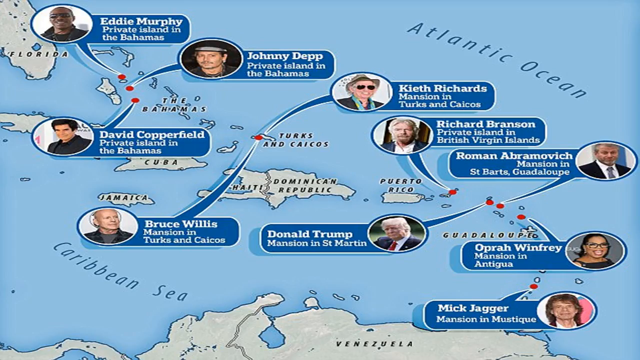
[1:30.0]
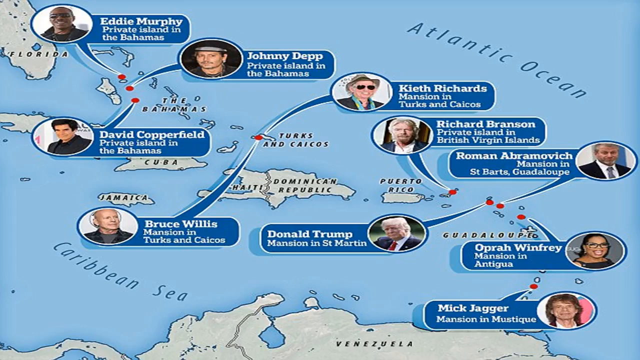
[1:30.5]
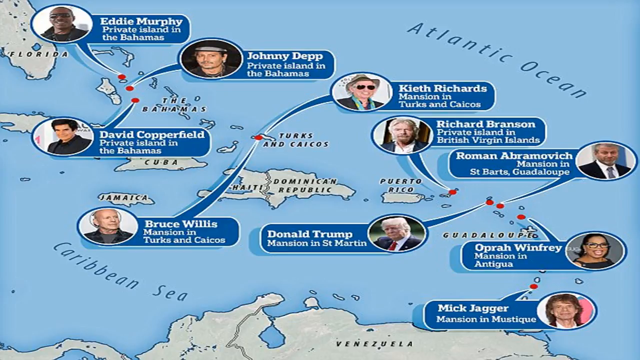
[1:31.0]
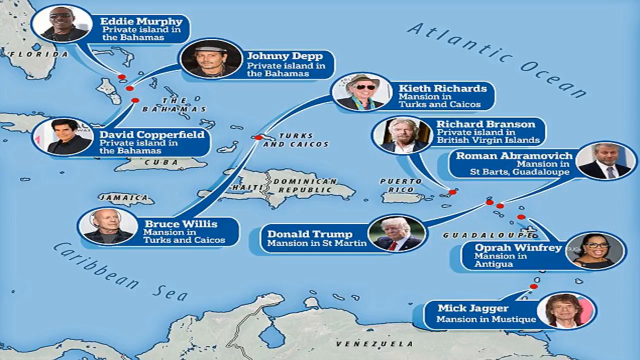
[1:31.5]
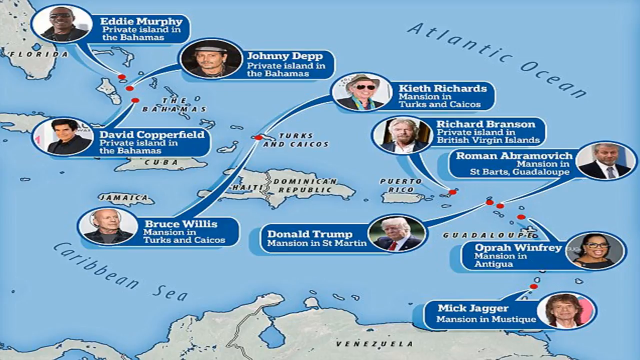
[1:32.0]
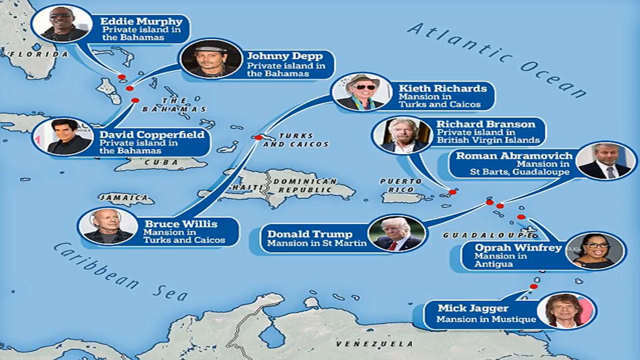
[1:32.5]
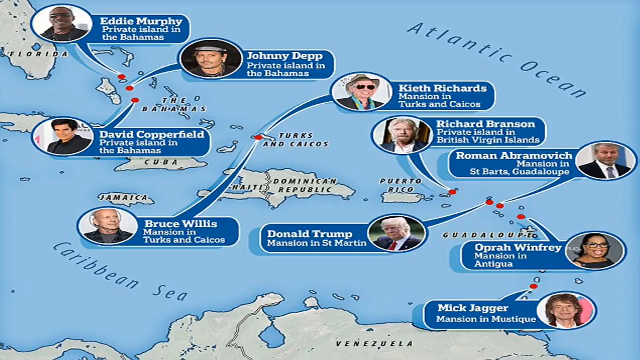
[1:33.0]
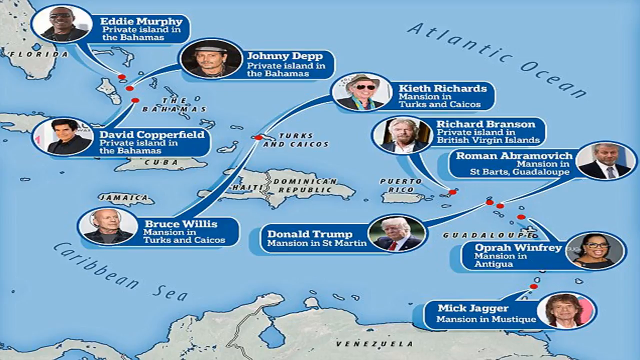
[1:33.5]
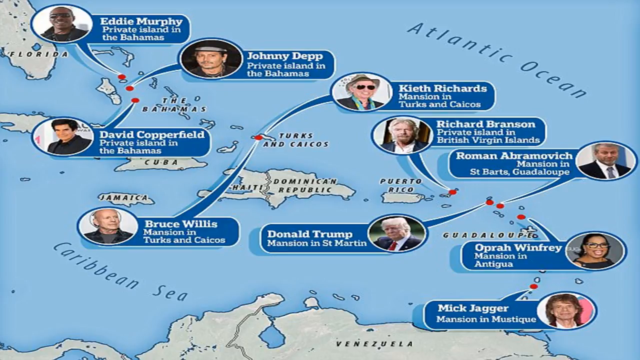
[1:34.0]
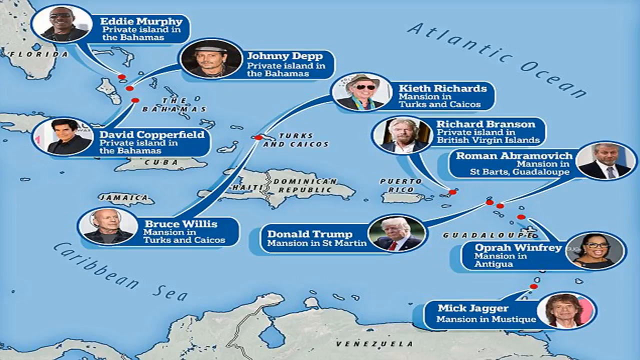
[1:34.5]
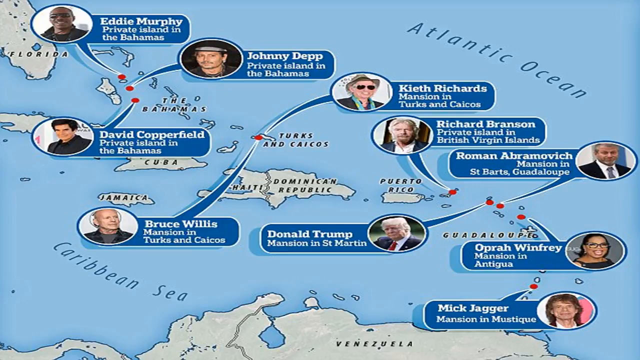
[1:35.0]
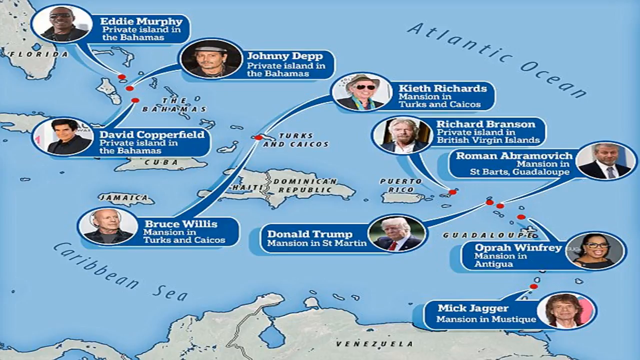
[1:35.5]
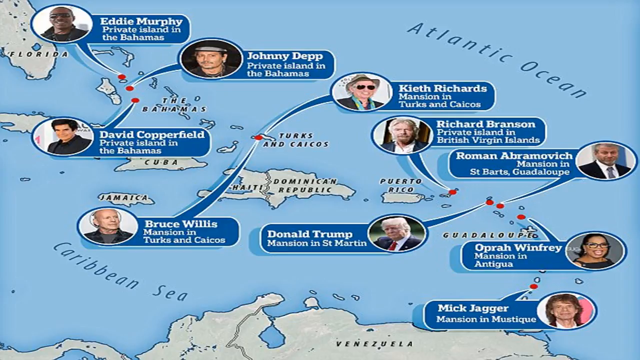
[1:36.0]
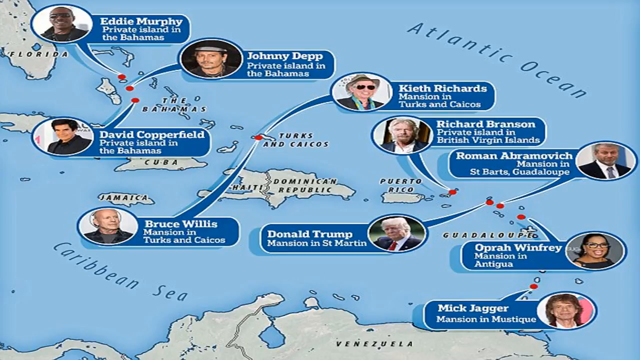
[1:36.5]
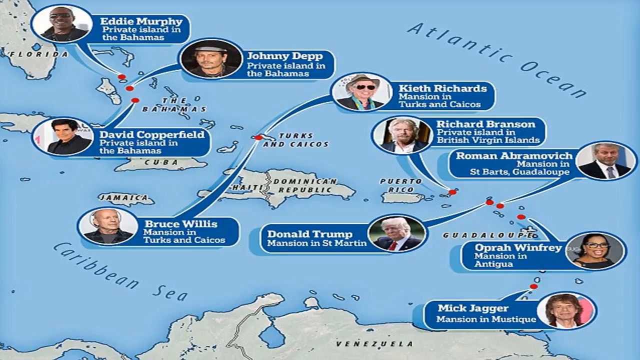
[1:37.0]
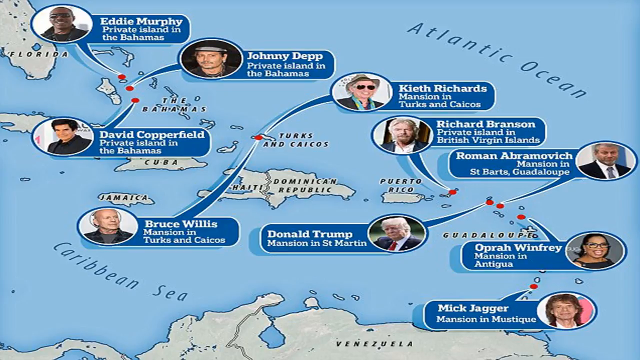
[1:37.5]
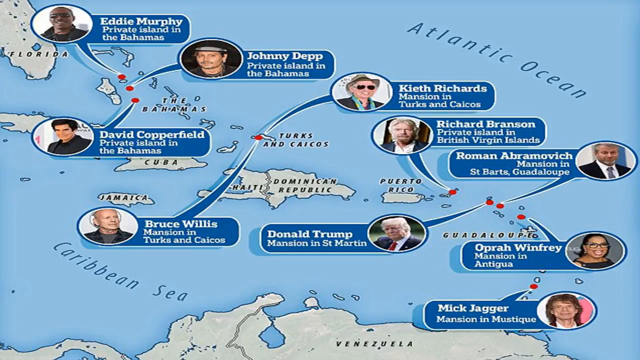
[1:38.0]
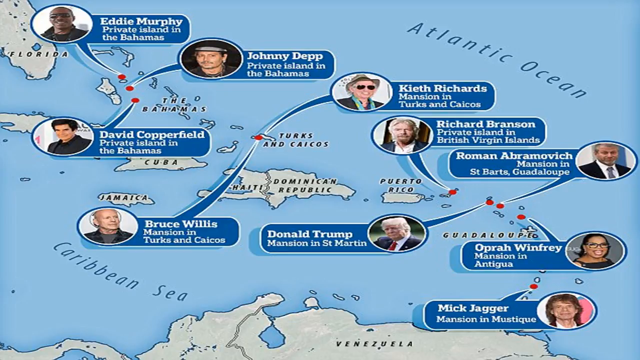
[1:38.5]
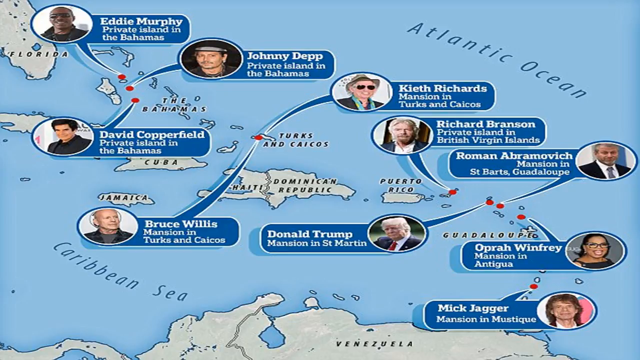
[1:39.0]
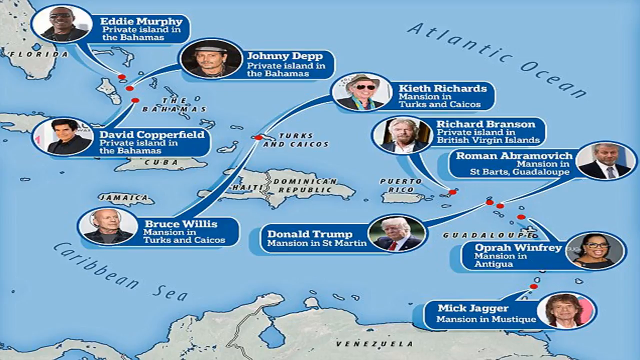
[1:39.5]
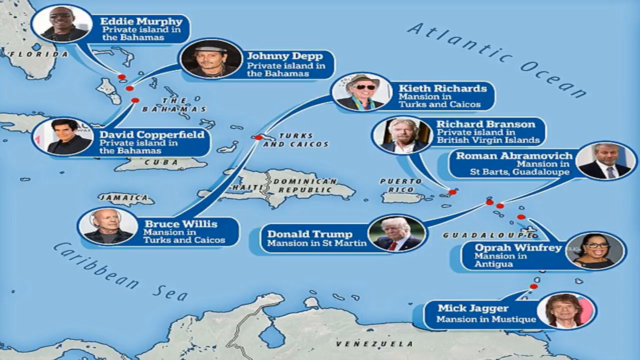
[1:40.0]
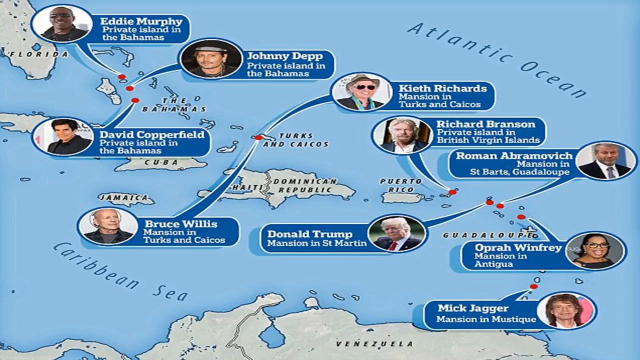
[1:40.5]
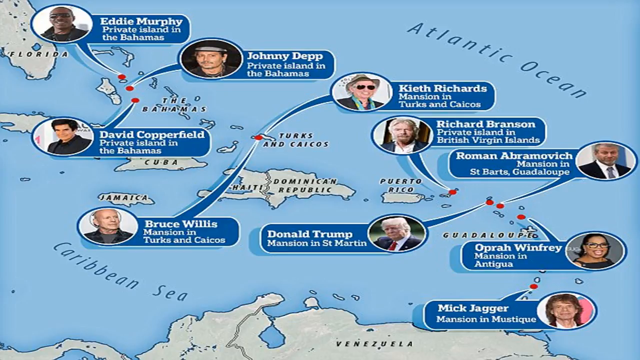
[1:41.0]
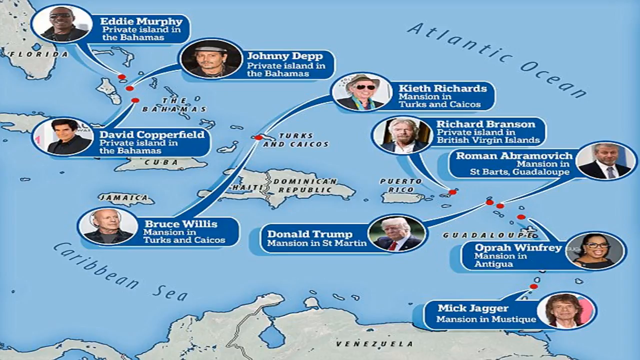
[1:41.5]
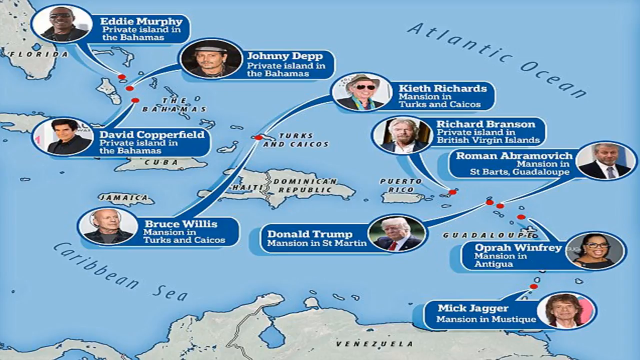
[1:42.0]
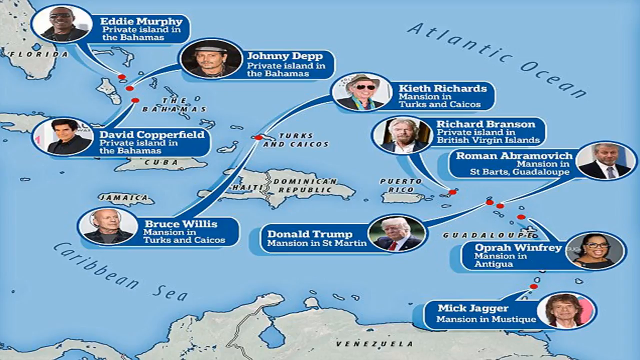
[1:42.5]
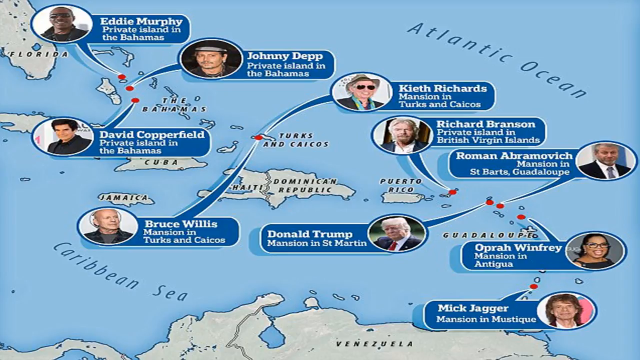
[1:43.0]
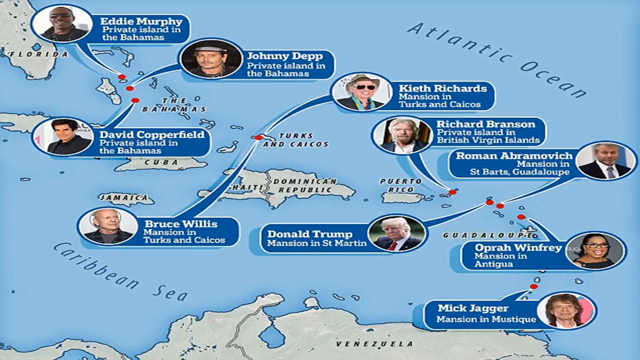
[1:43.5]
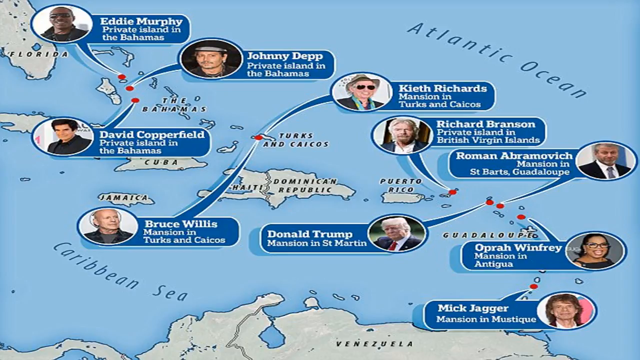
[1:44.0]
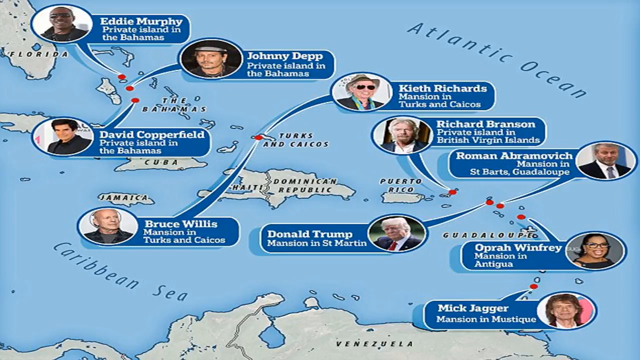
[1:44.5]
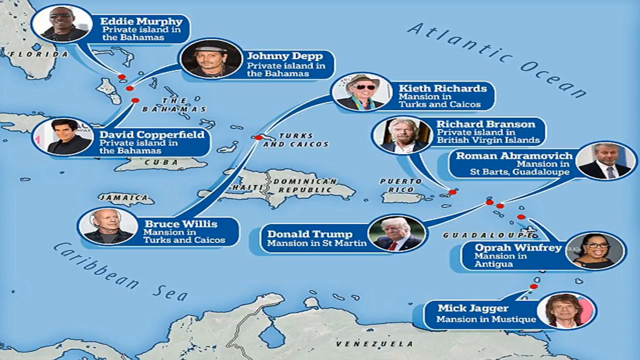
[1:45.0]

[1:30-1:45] The video ends on what looks to be a map of the Caribbean Sea and its islands, such as Haiti, the Dominican Republic, Puerto Rico, Cuba and Jamaica. Captions pop out on the different islands, apparently naming celebrities along with their photos and the locations of their houses. Examples include Eddie Murphy with a private island in the Bahamas, Johnny Depp with a private island in the Bahamas, David Copperfield with a private island in the Bahamas, Bruce Willis with a mansion in Turks and Caicos, Richard Branson with a private island in the British Virgin Islands, and Oprah Winfrey with a mansion in Antigua, among others.